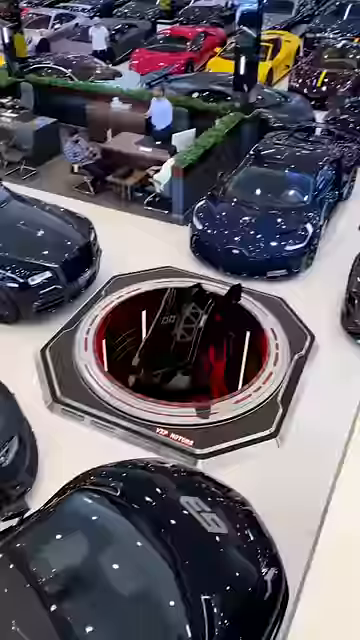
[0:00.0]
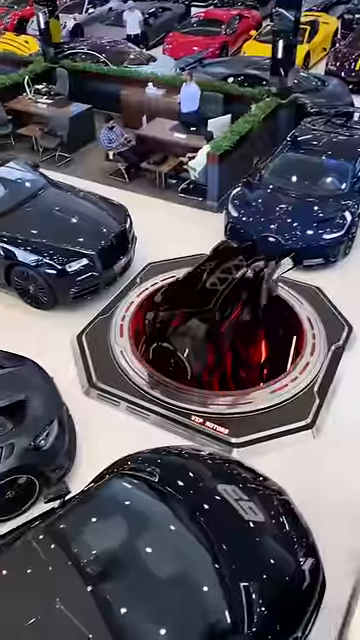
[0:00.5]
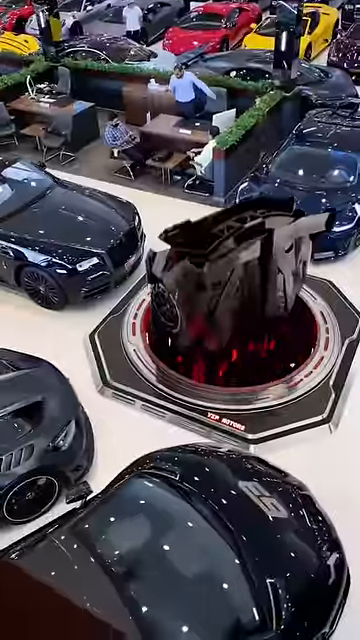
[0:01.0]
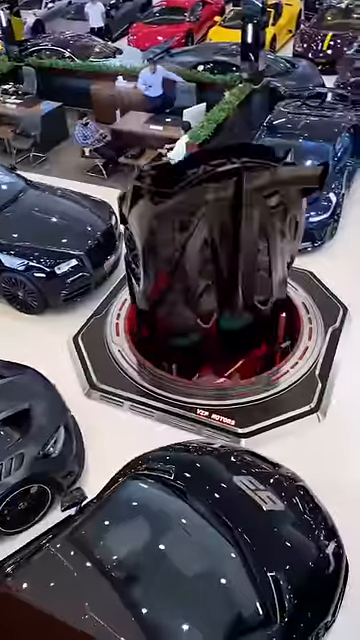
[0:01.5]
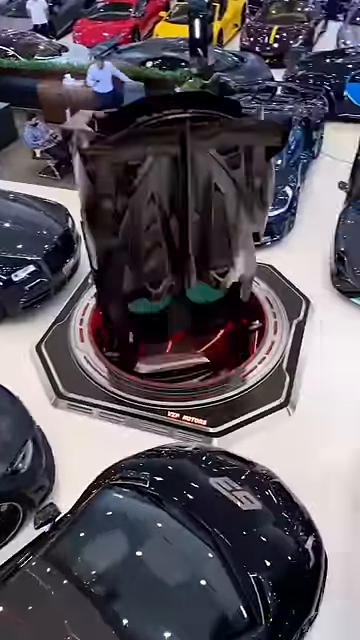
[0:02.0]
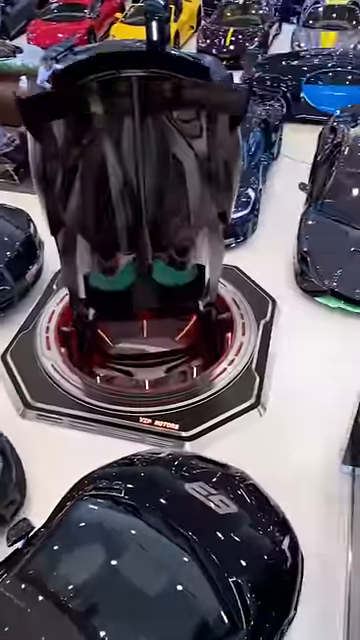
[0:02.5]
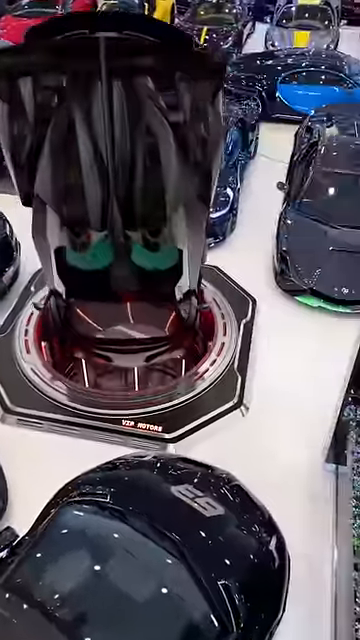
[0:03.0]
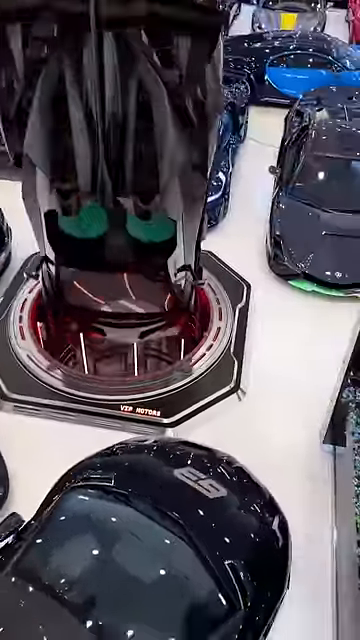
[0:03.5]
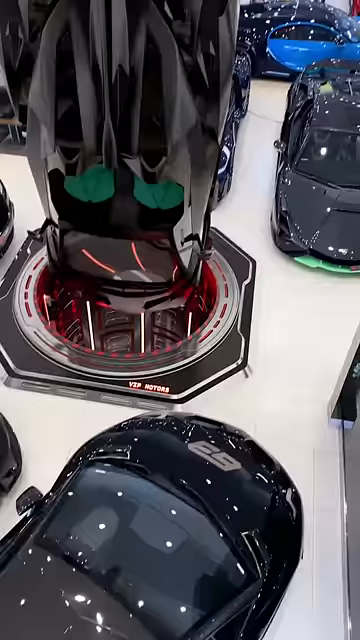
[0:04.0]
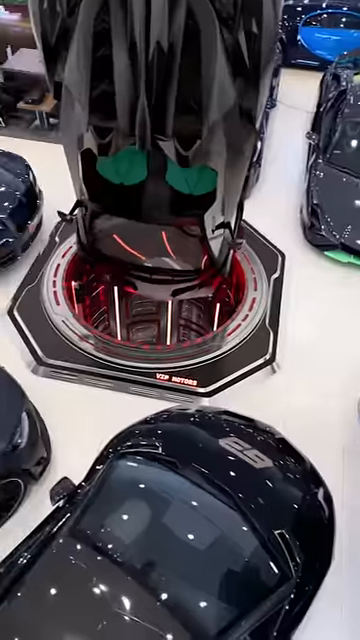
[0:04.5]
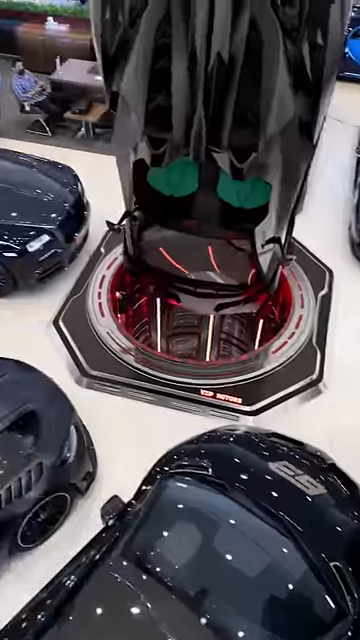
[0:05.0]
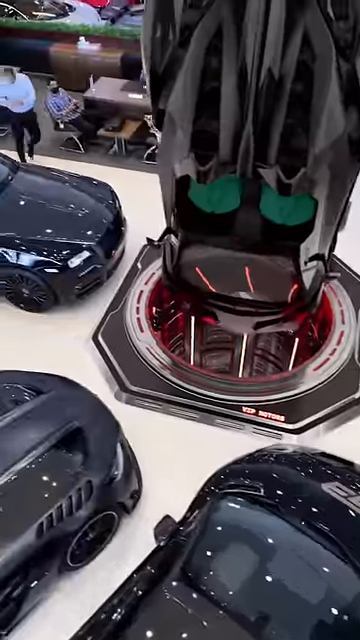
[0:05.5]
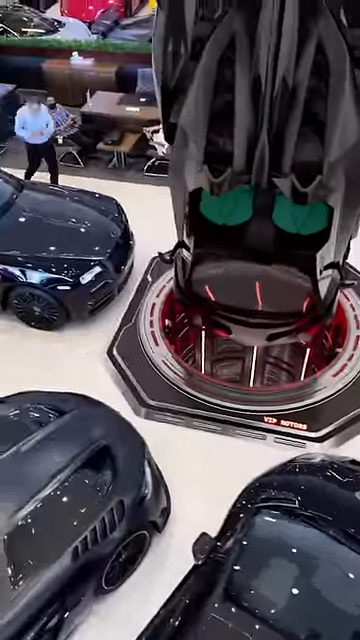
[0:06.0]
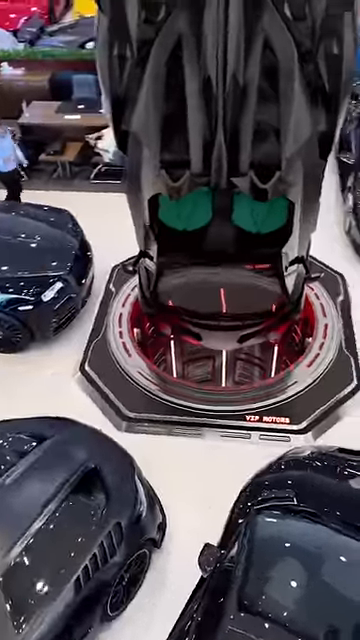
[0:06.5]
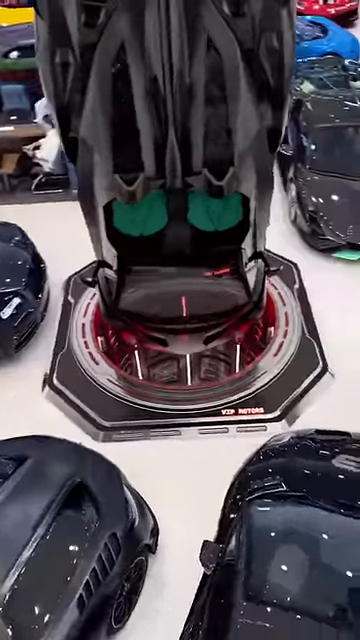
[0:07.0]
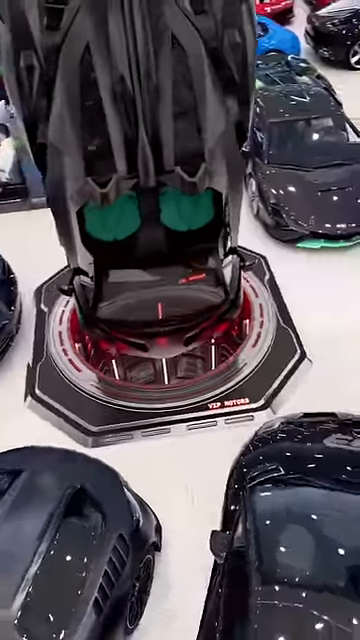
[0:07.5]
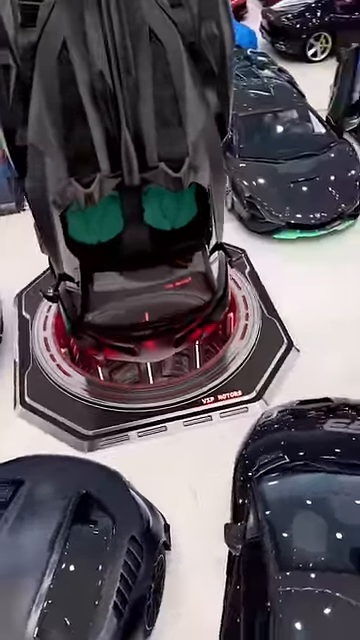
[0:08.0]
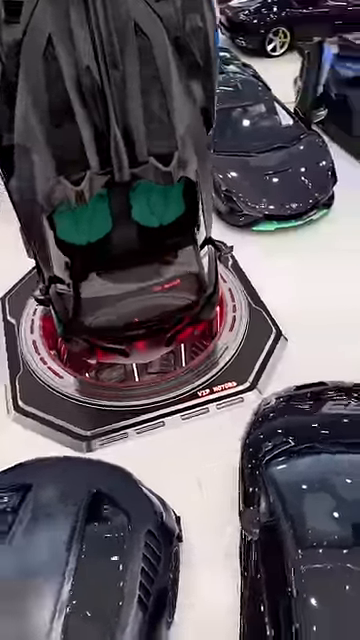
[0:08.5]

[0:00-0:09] A showroom with a futuristic look holds many cars, presumably Lamborghinis or other cars. Some people are sitting at a table. Suddenly a car comes out of the floor, totally vertical, possibly sitting on its nose. It comes up out of a cylinder-shaped area in the floor and kind of rises up. One person from the table stands up and walks over to it, as if he had pushed a button to bring it up out of the floor. The car is not shown going down onto its four wheels; it stays in that vertical position when it comes up and stops. There are red lights and white lights in the tube or cylinder-shaped structure it comes out of. Many of the cars right around it are black, while some blue, red and yellow ones can just be made out in the background. The space is mostly all vehicles except for a small area with the table and a few chairs, where three gentlemen are sitting. The table looks like a desk, and the area might be their office.